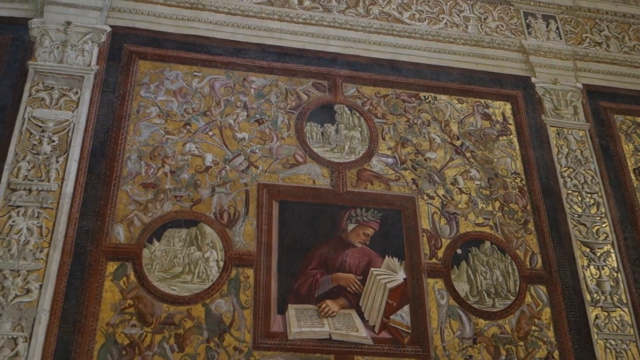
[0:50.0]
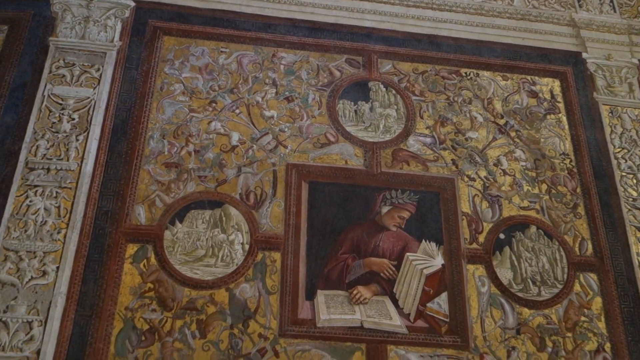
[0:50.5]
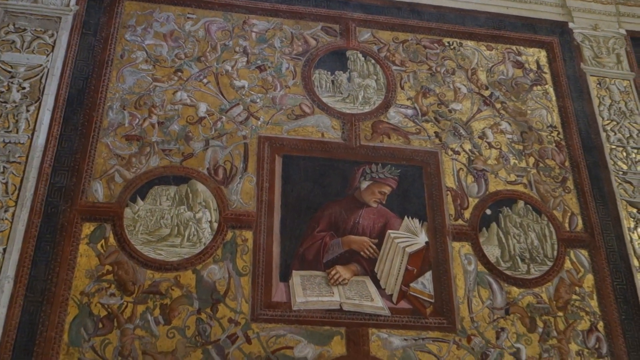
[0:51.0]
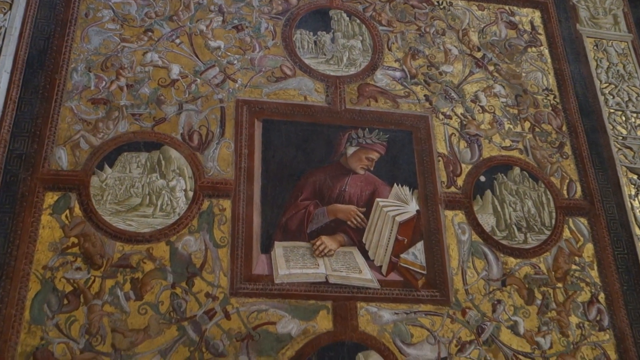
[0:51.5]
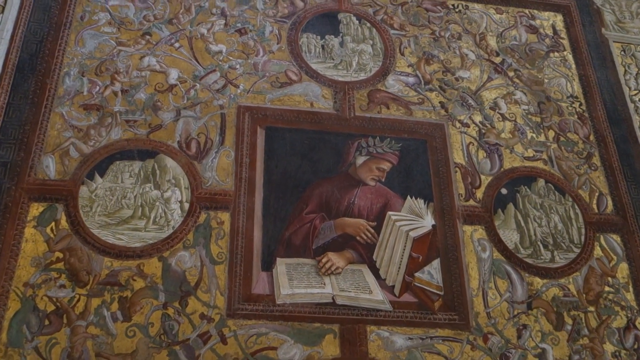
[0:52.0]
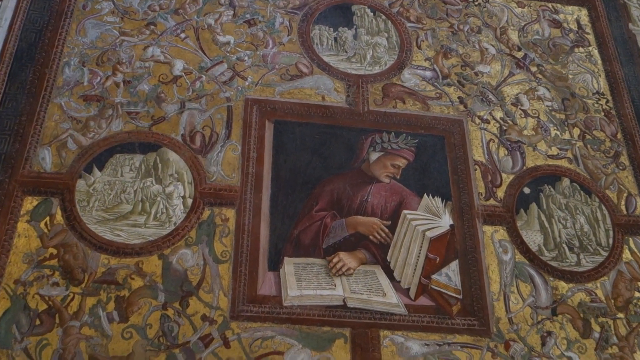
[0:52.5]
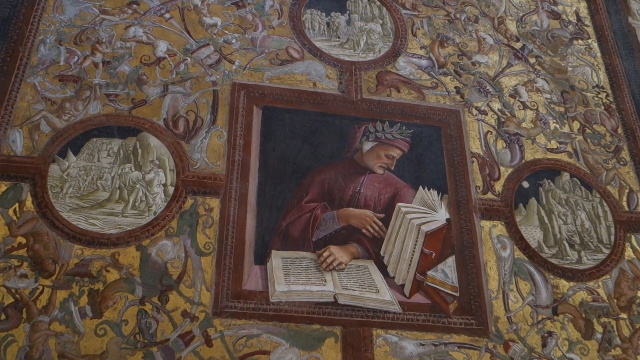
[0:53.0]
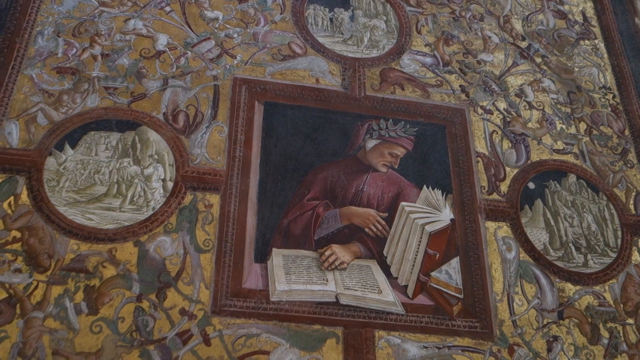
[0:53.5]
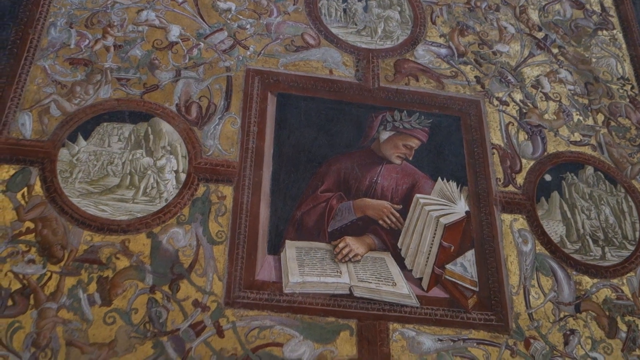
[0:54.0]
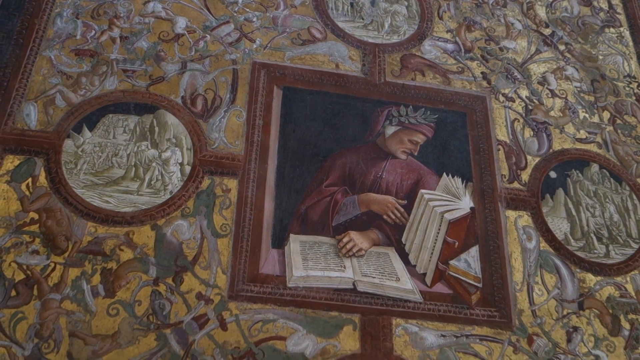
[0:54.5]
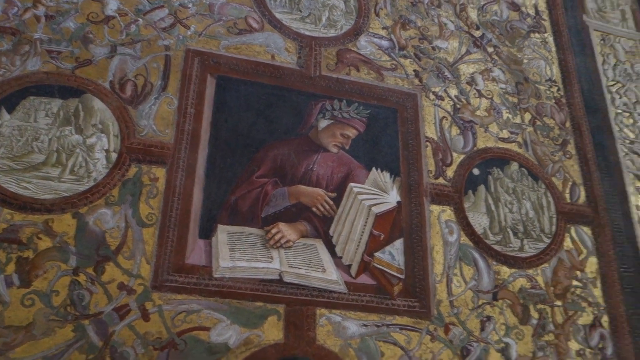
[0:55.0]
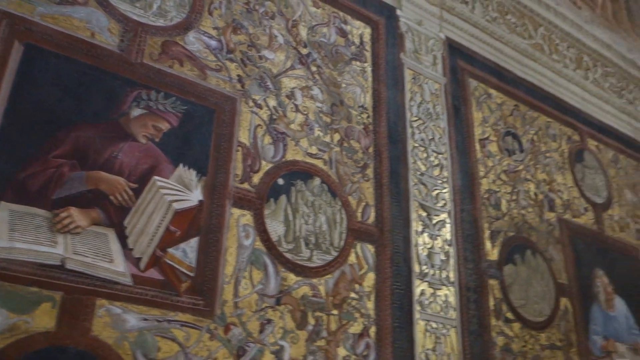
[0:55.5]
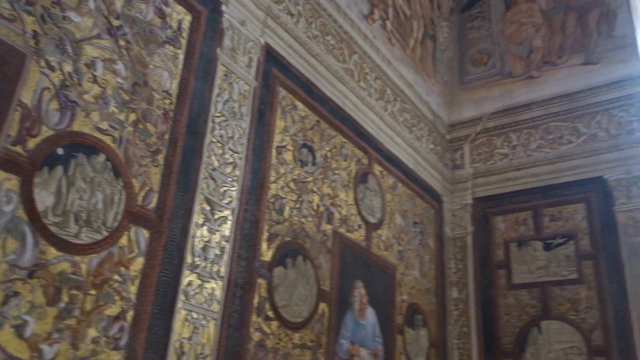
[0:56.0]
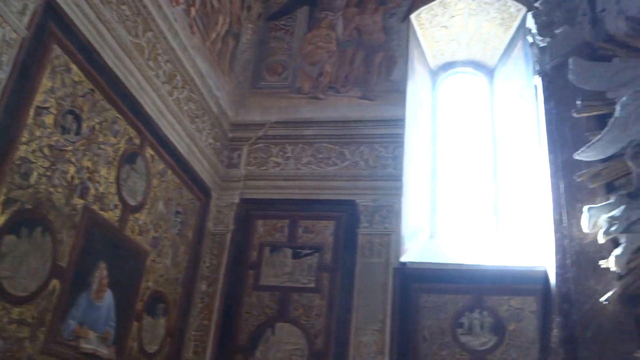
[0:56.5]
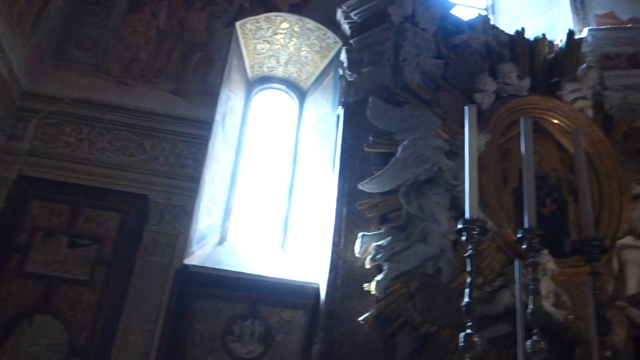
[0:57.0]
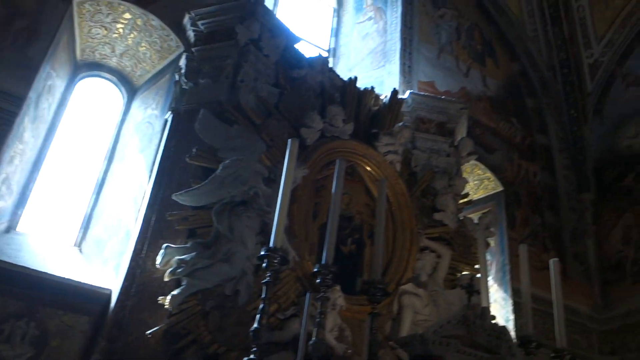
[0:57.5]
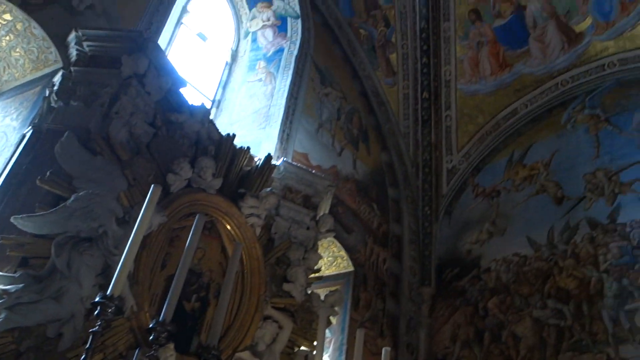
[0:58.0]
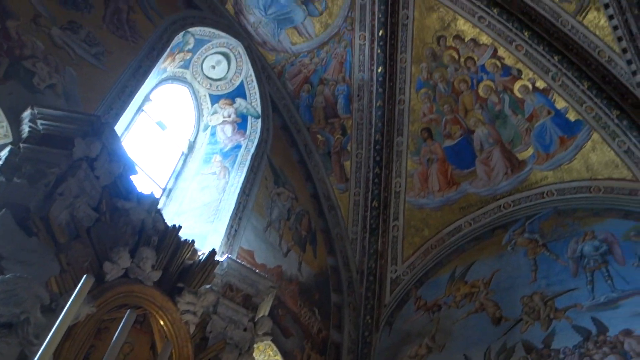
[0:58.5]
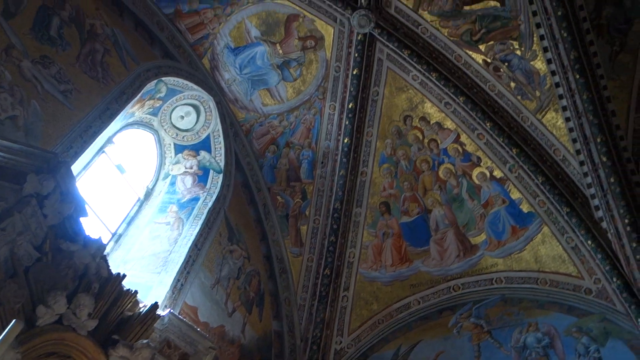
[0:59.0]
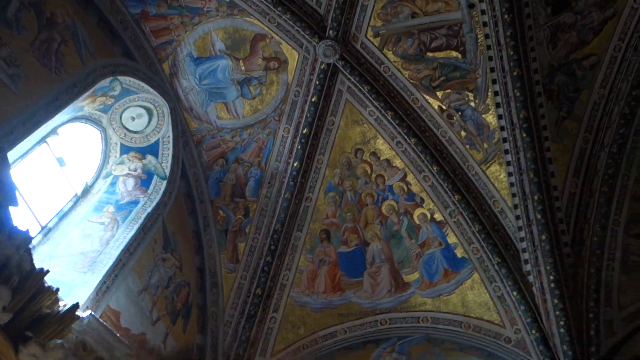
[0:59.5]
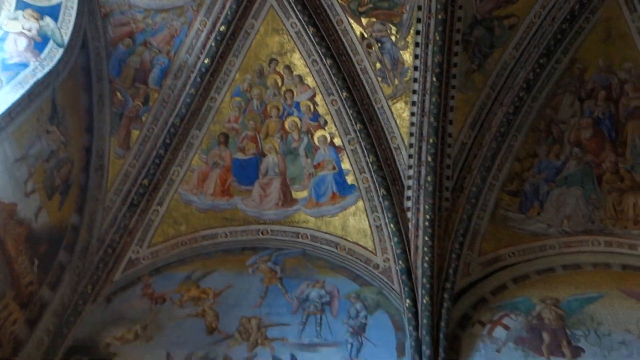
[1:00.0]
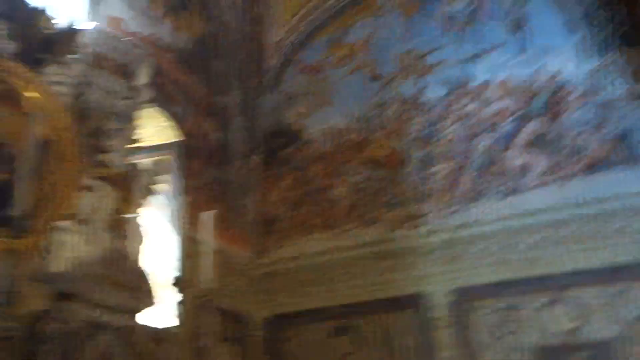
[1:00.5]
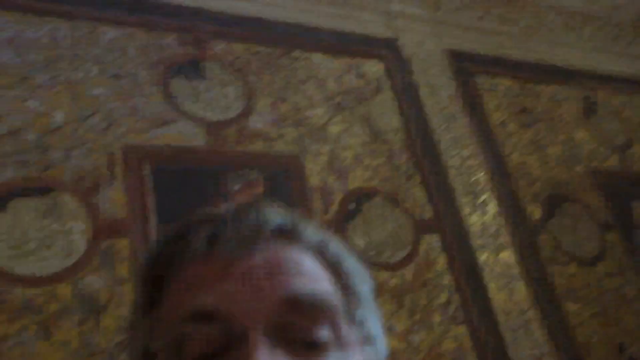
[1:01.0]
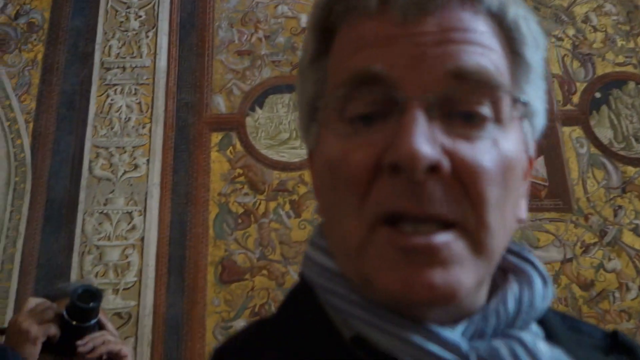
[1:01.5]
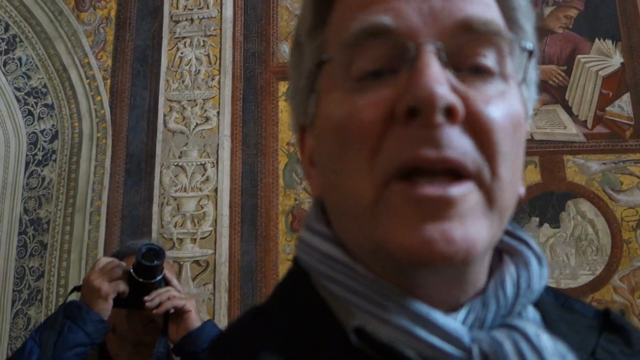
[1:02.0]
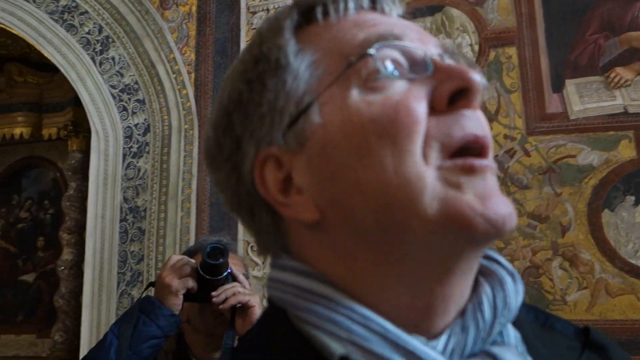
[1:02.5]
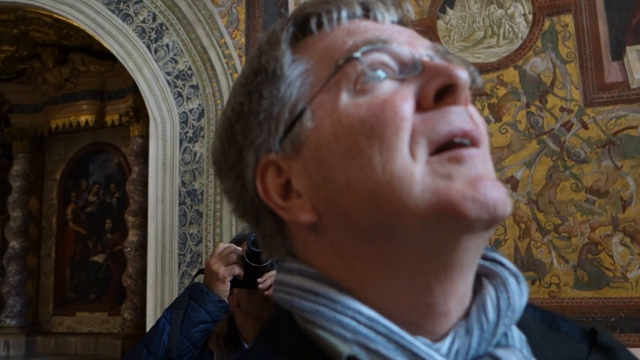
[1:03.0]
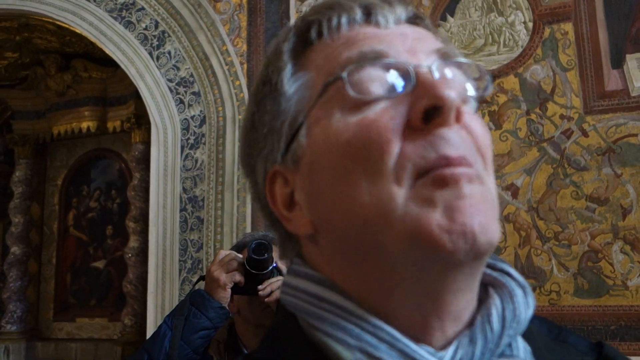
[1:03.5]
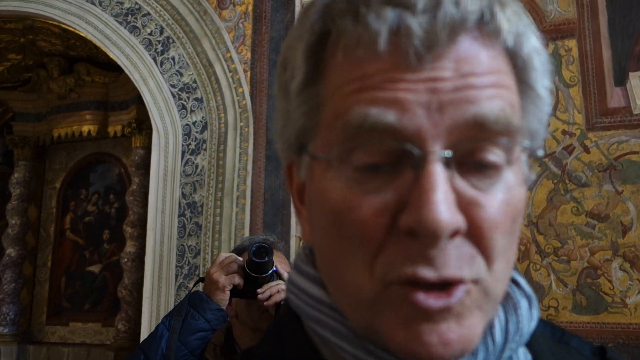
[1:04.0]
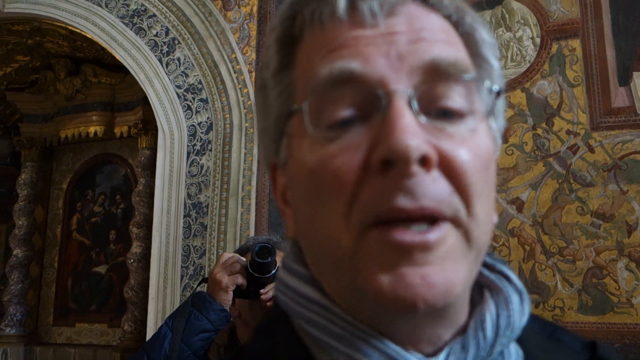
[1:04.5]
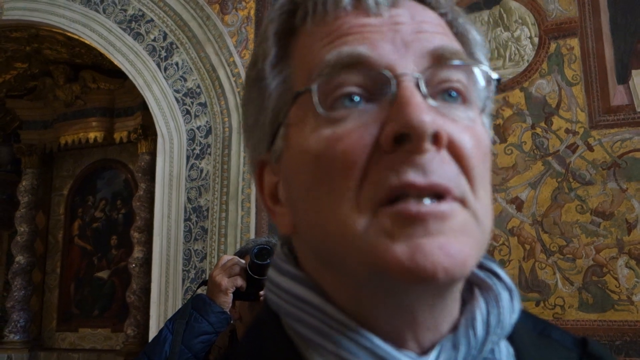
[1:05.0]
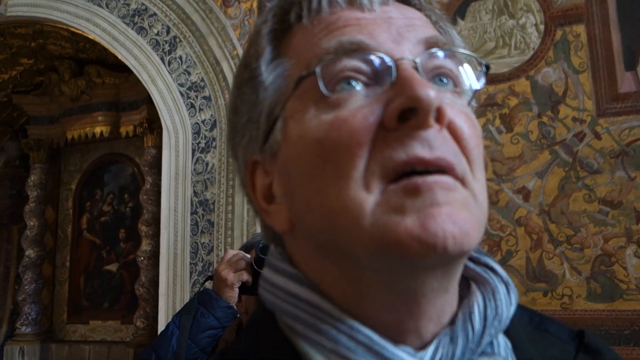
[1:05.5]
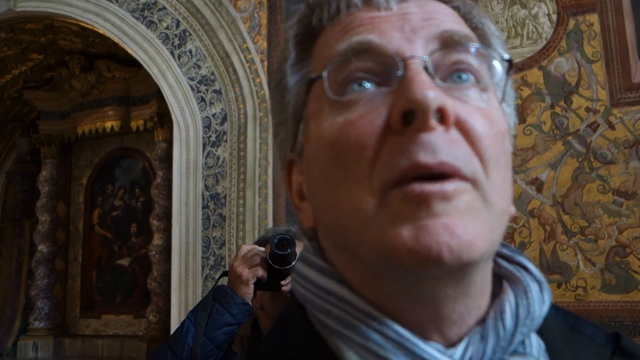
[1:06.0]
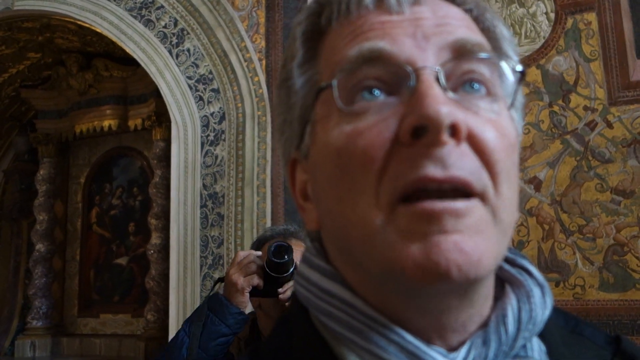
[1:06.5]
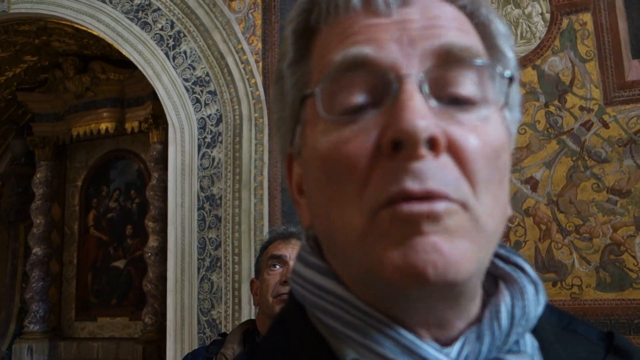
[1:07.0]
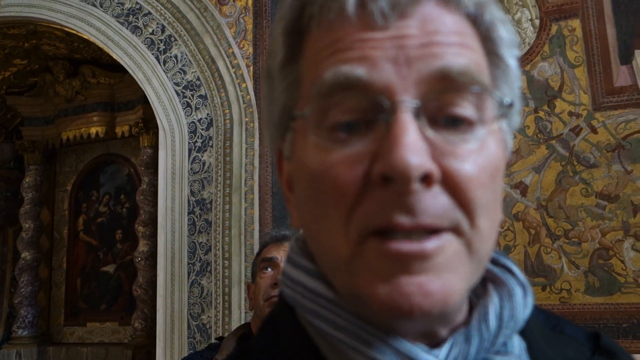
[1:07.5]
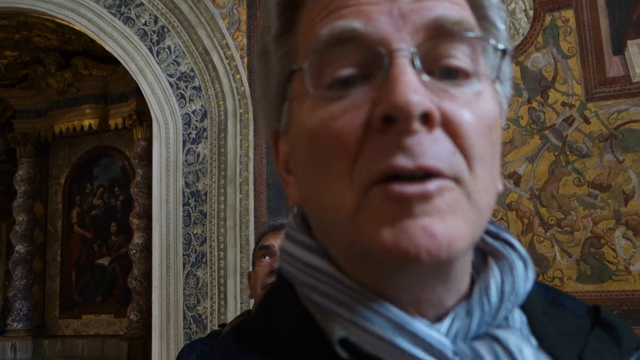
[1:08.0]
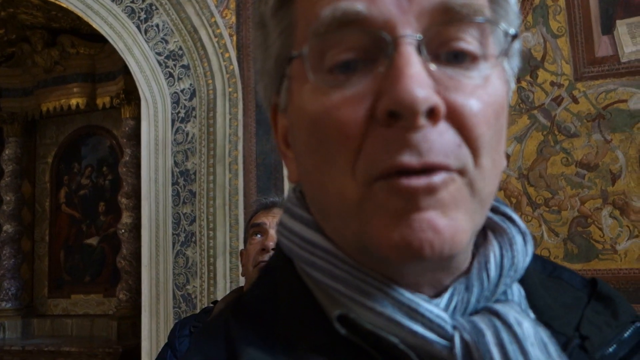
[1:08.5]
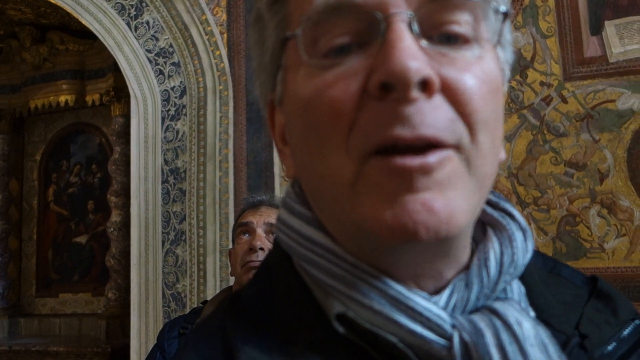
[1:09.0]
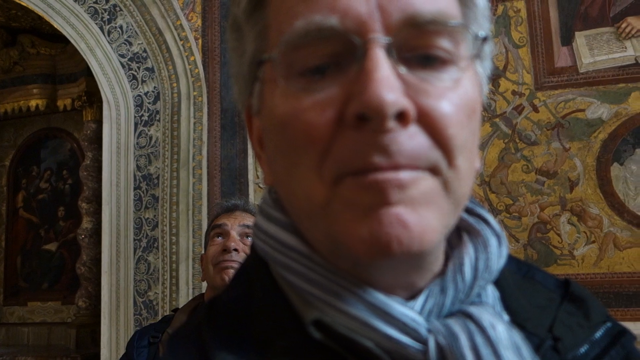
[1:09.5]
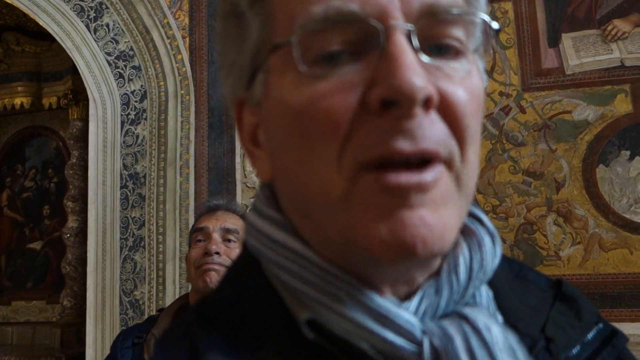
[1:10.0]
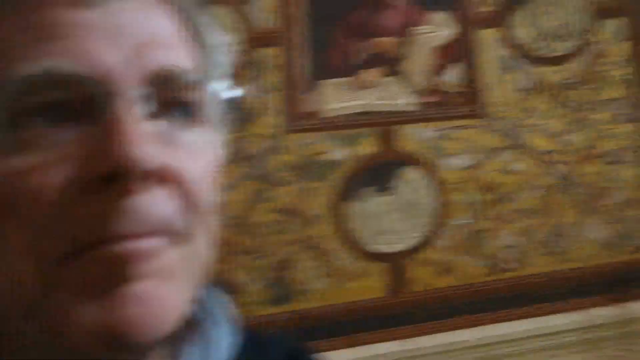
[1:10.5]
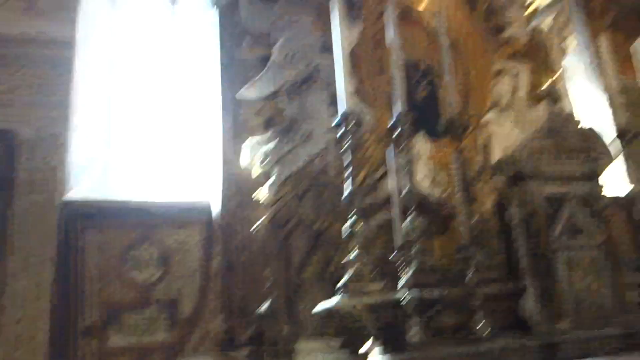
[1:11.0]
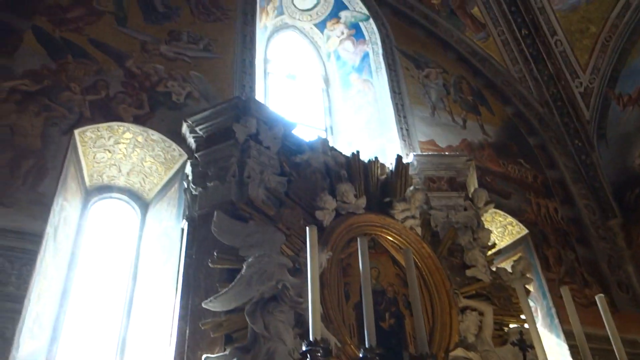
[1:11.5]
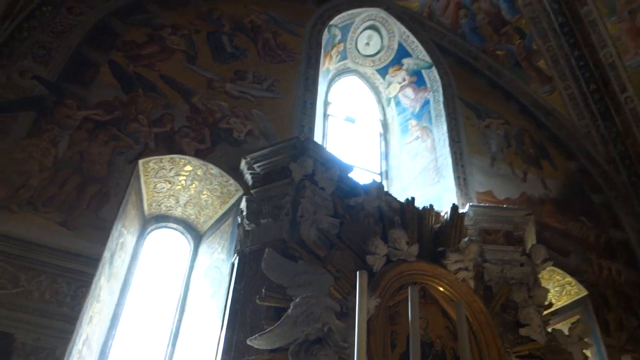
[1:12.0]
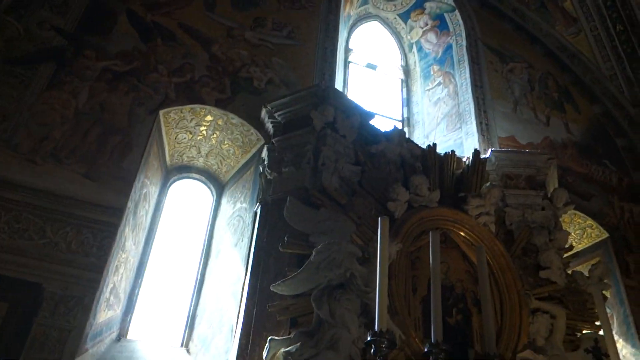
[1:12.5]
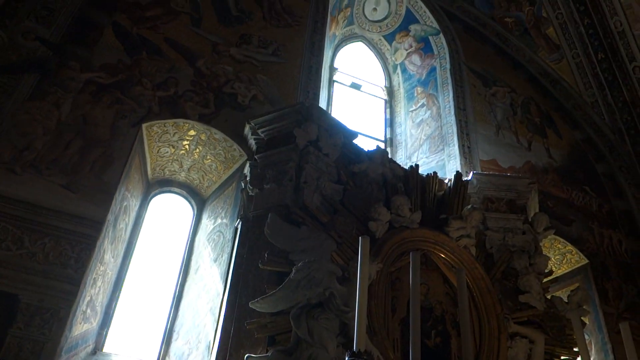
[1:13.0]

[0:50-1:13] A close-up shows an image inside a square: a man in a red cape reading an open book to his left while also having an open book in front of him. His left hand is in the open book in front of him, and he has leaves in his hair. The camera pans quickly back to the right, showing a very bright stained glass window and three tall white candles. The camera pans up to the ceiling, where there is another stained glass window and triangles compartmentalizing the various images. The camera then pans quickly down to the white male holding the camera. He is a tall, older white gentleman with gray hair, wearing glasses, a gray scarf and a black hat.